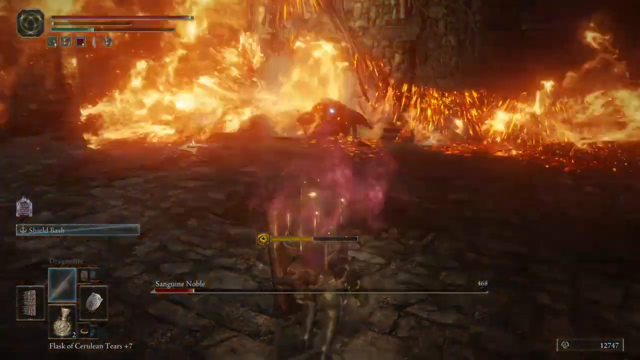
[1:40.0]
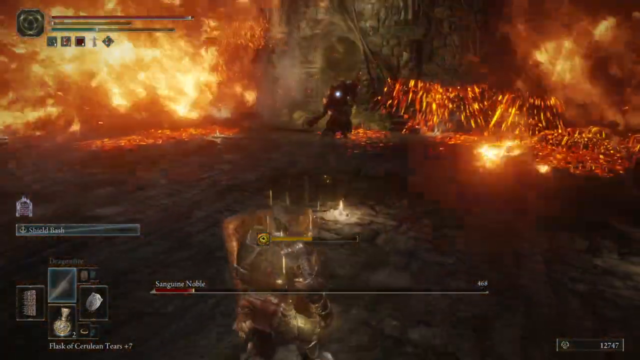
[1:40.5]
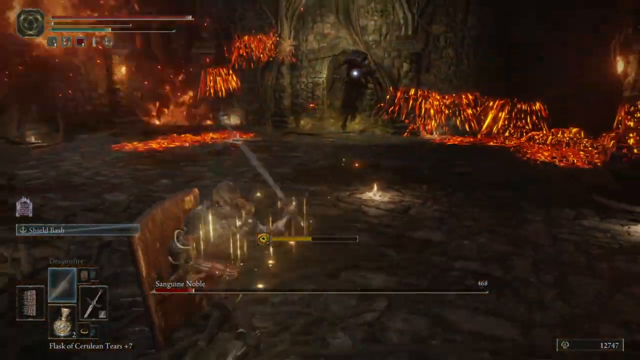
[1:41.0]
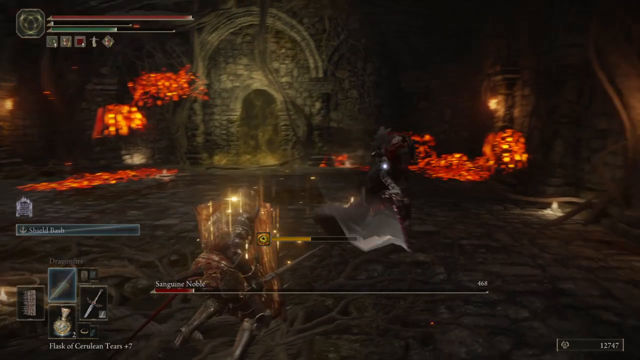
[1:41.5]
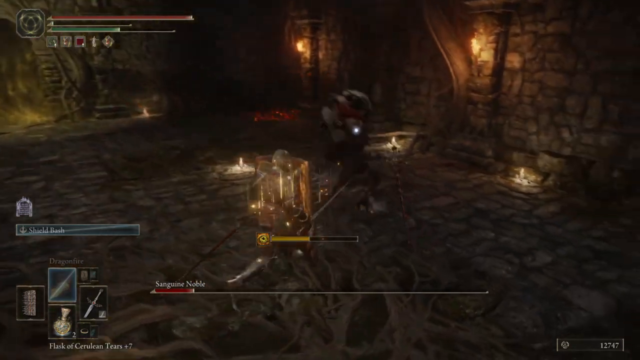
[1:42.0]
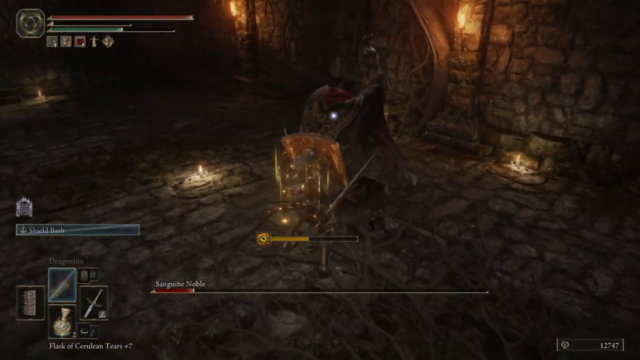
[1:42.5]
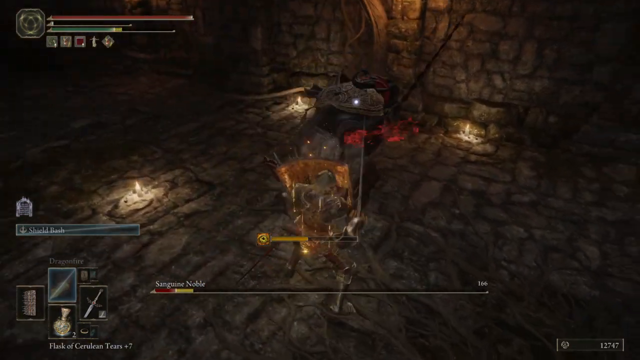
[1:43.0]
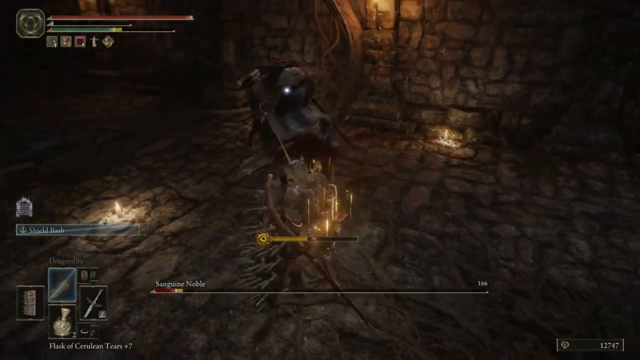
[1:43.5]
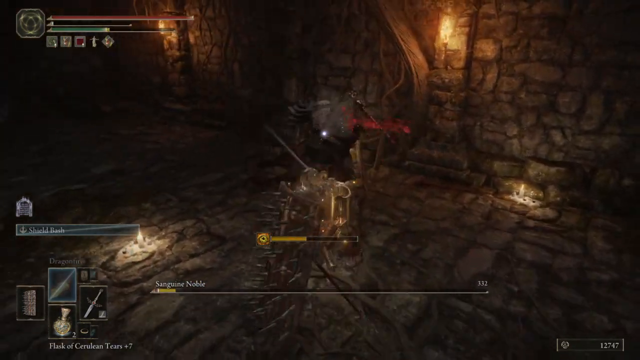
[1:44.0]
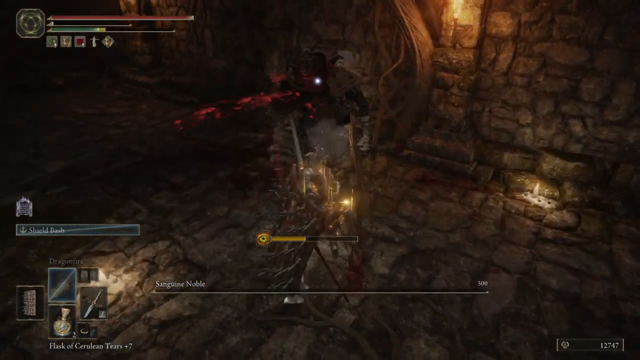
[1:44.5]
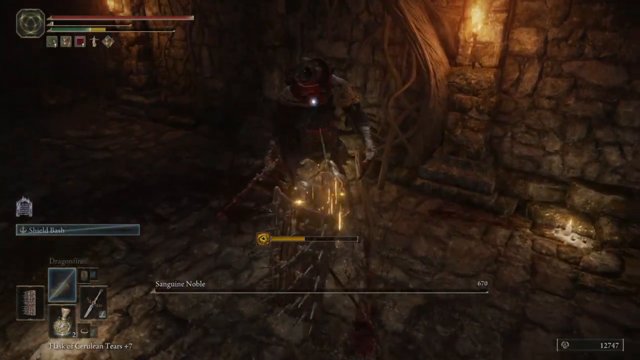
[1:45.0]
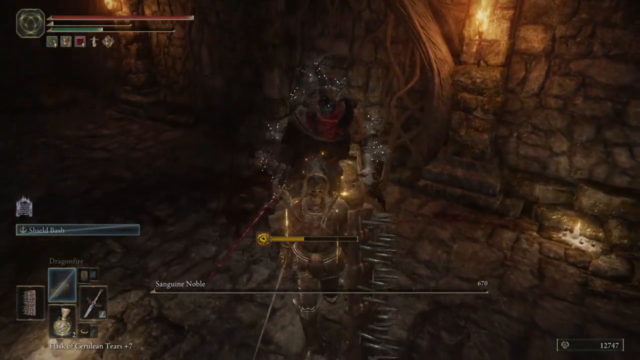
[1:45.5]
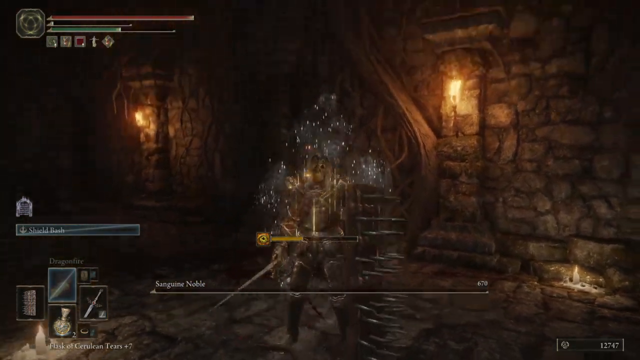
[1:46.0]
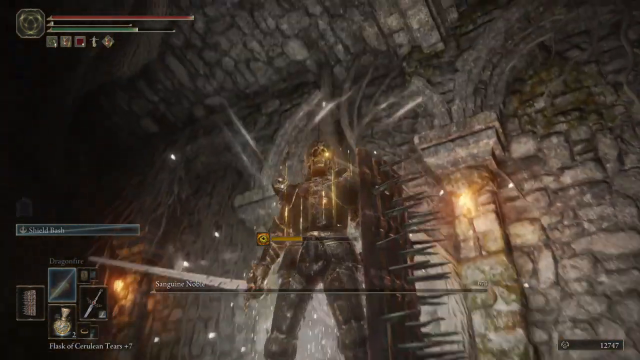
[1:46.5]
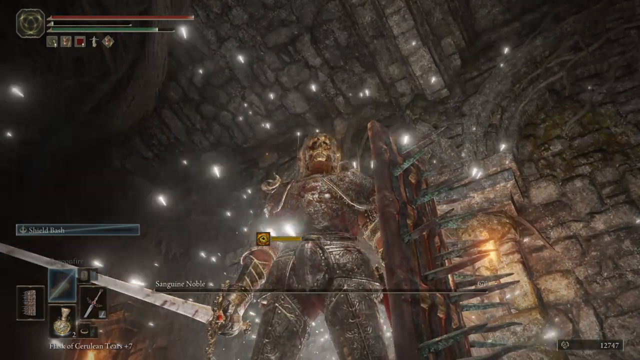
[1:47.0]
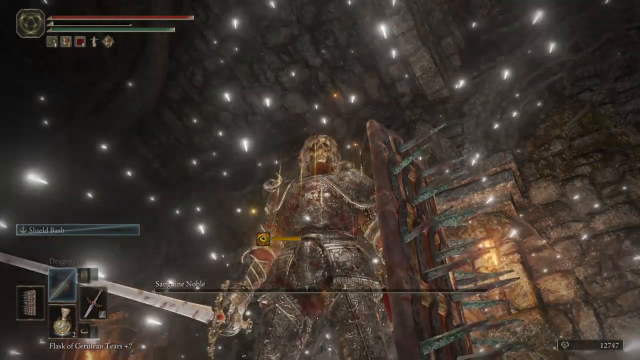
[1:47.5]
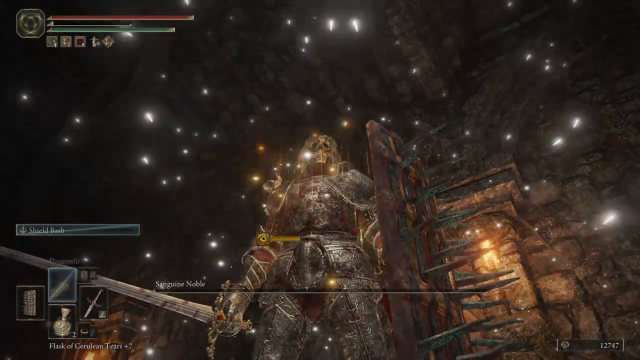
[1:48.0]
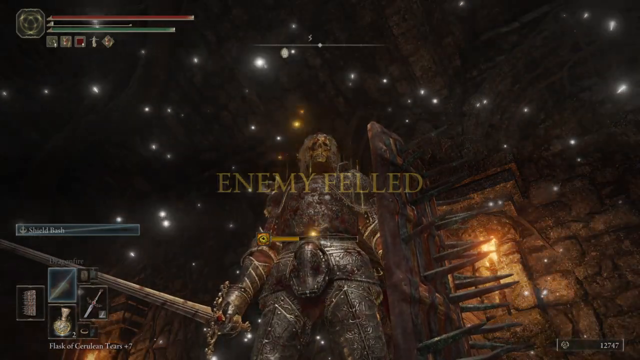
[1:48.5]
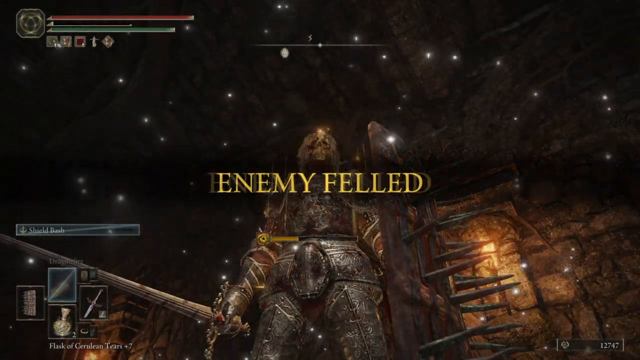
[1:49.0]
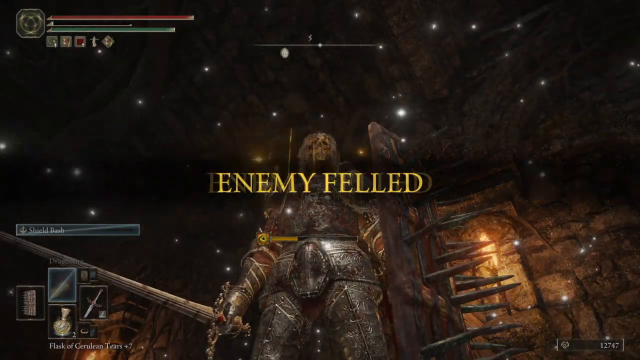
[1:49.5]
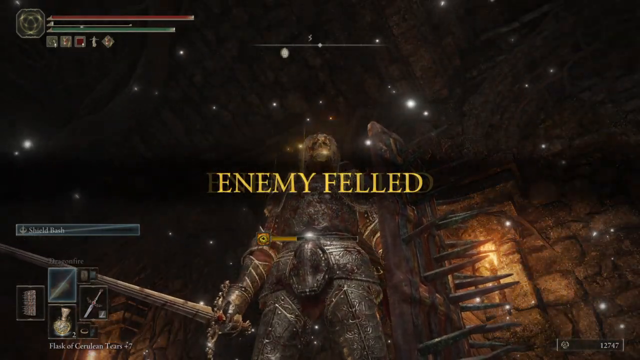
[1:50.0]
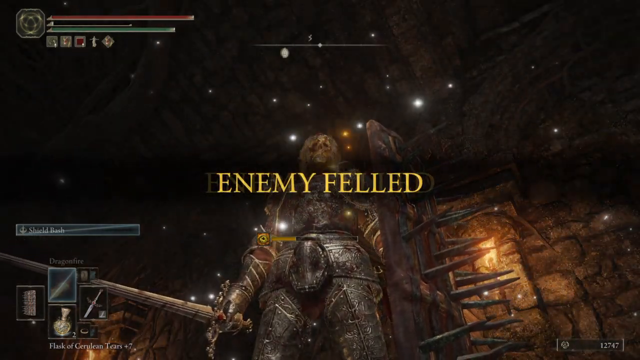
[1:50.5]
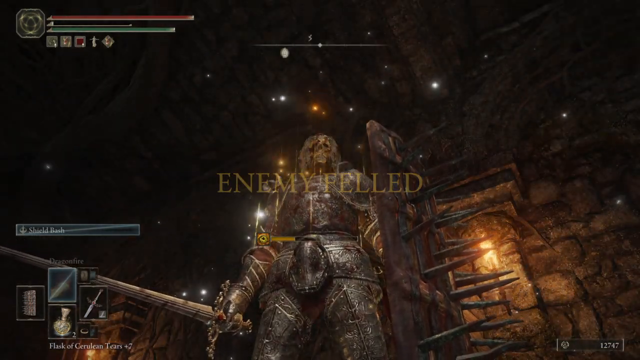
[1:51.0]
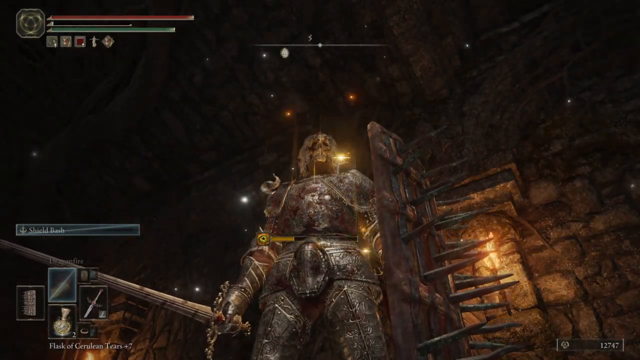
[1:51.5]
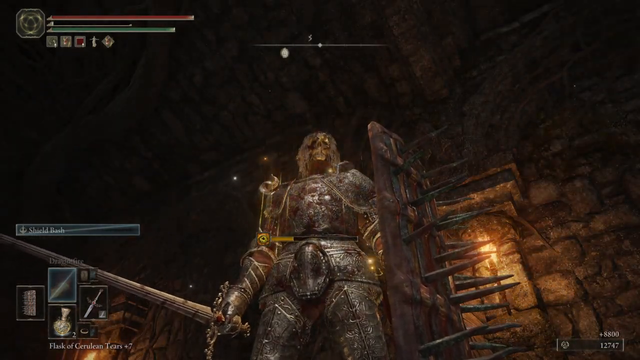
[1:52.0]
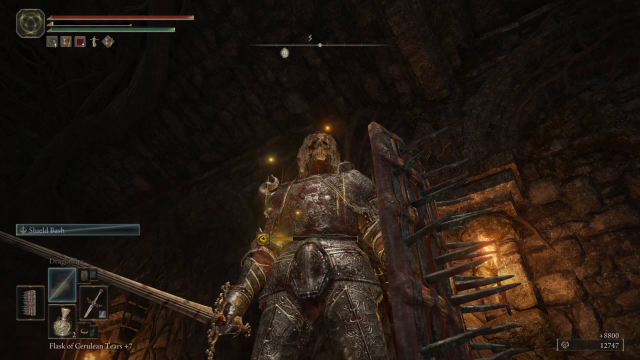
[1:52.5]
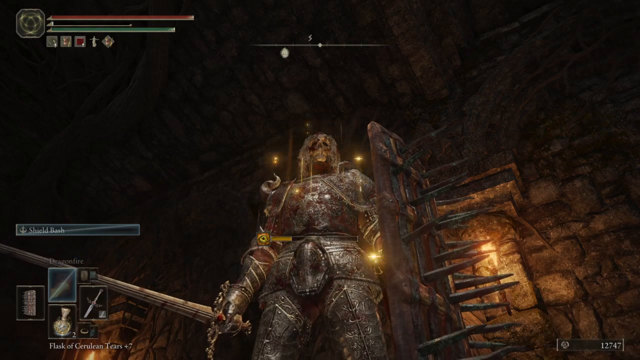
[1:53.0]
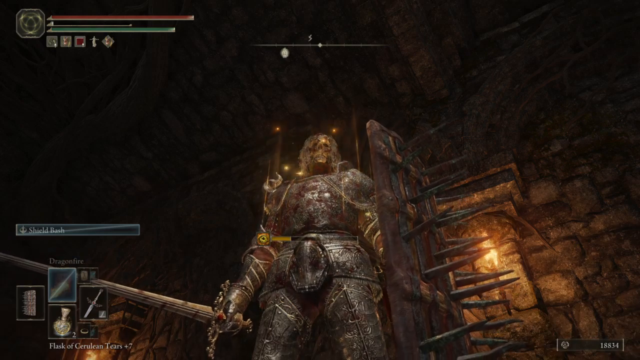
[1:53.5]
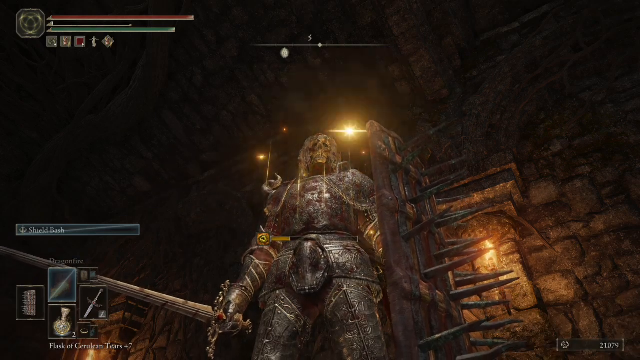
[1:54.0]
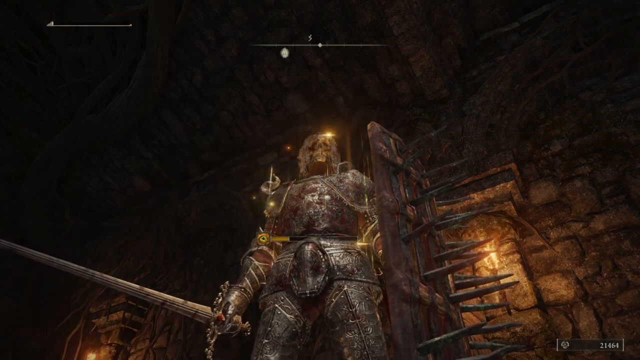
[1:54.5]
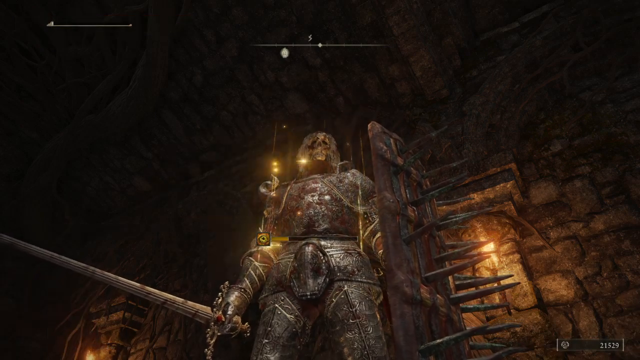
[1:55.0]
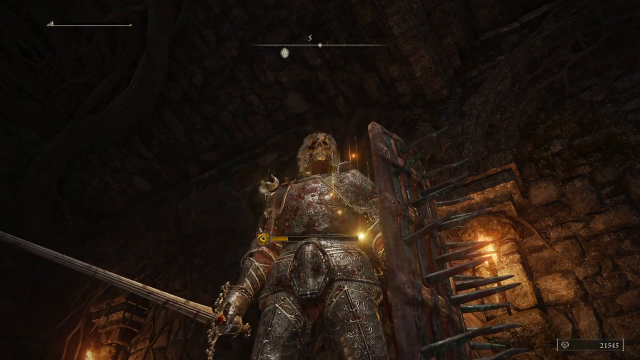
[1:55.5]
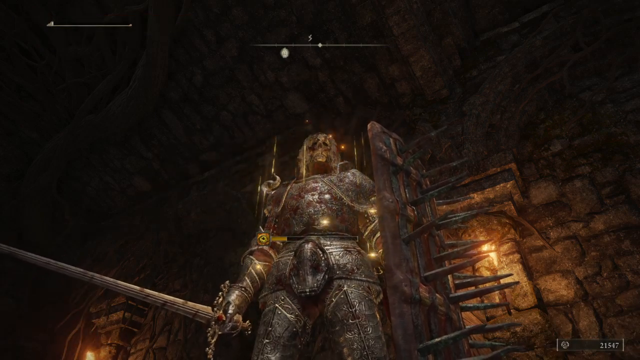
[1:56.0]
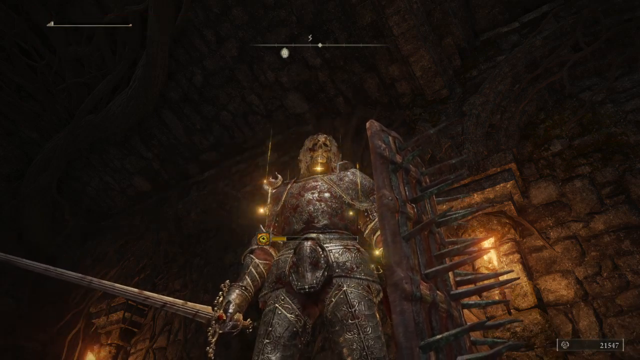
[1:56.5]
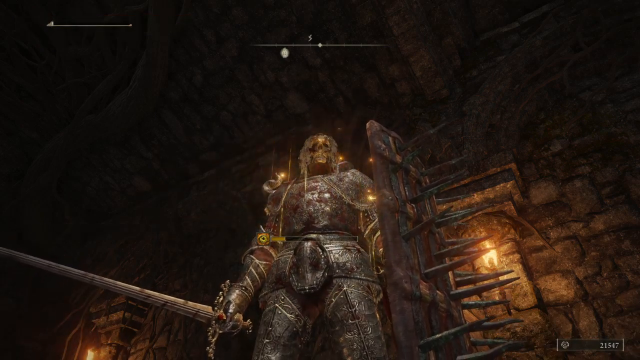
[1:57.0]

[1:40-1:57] The main character has just finished spewing fire onto the antagonist, and some fire remains around it. After the fire dissipates a little, the antagonist does a really long, lunging jump forward toward the main subject, probably about ten feet, and starts trying to hit the main character with blade attacks. The main character hits the antagonist maybe three or four times, which takes it out, and the text "enemy felled" appears, showing the main subject won the battle.